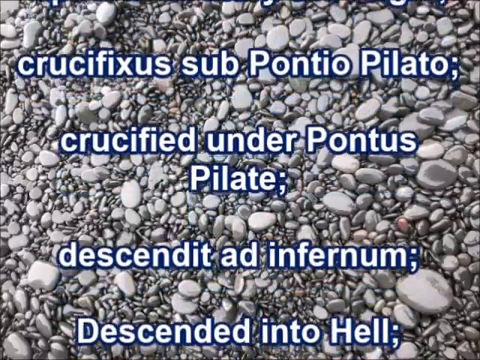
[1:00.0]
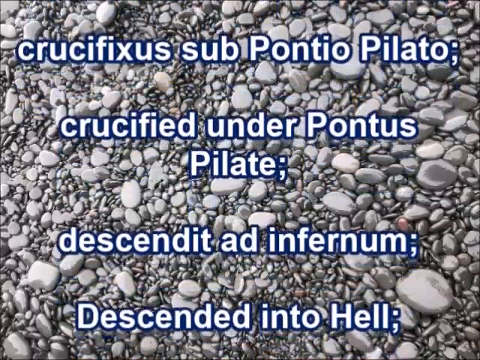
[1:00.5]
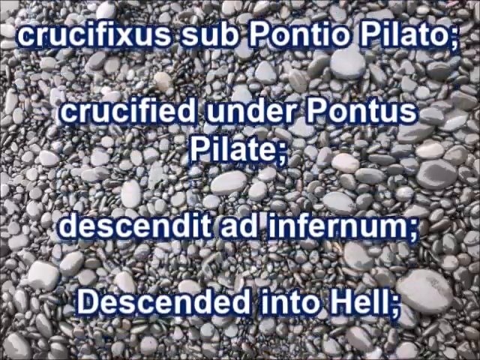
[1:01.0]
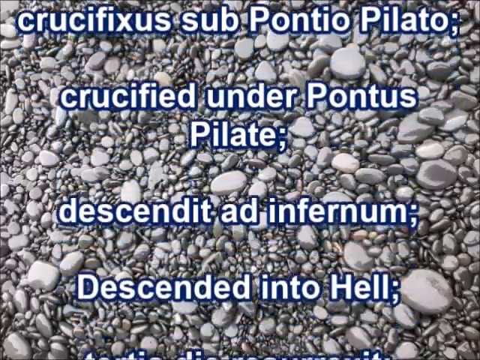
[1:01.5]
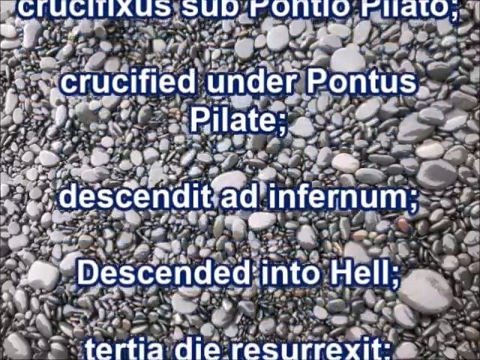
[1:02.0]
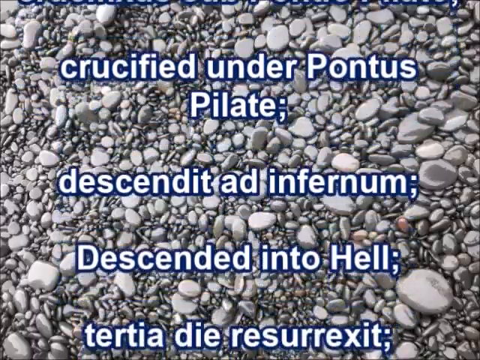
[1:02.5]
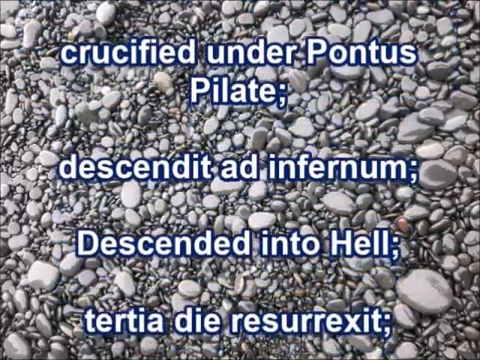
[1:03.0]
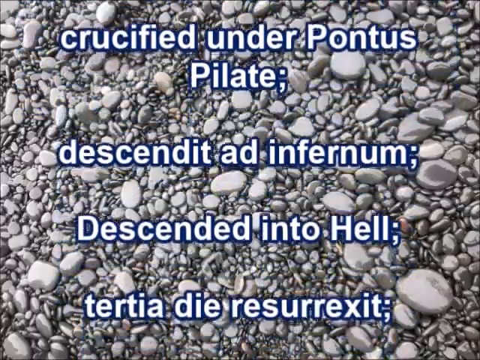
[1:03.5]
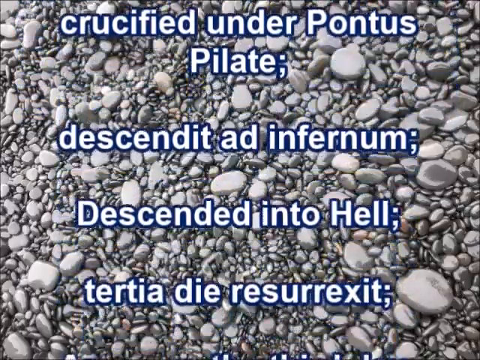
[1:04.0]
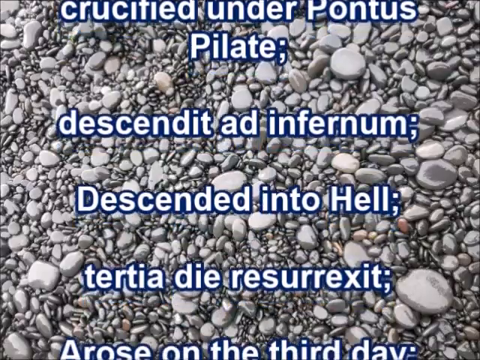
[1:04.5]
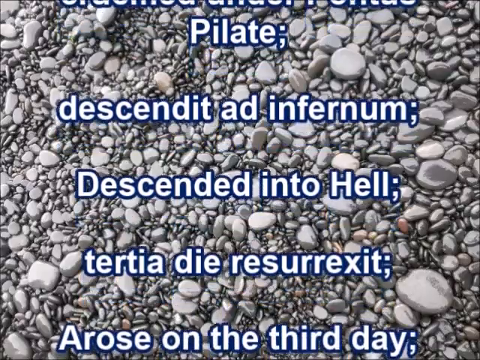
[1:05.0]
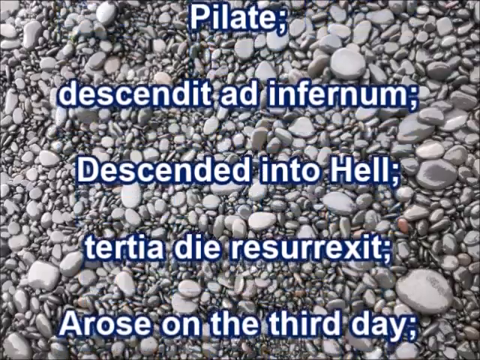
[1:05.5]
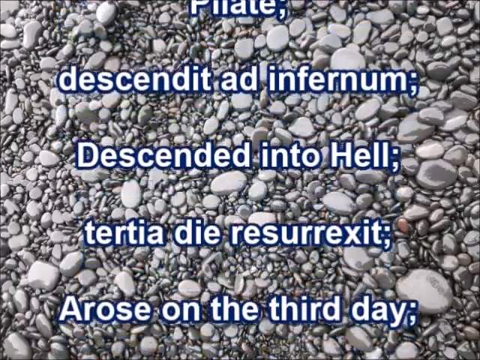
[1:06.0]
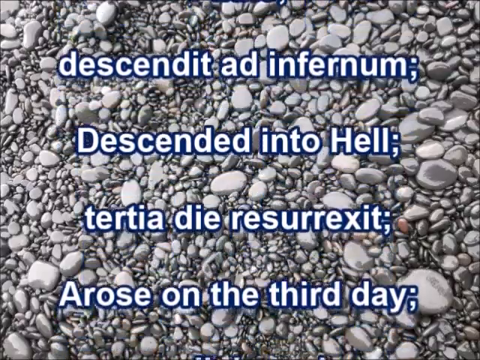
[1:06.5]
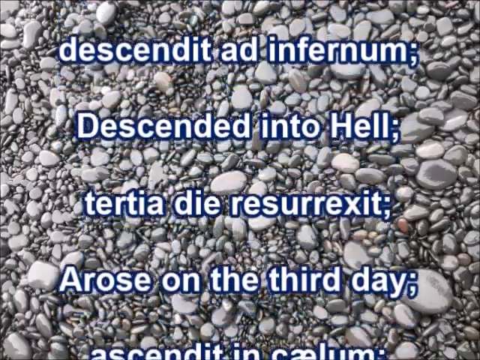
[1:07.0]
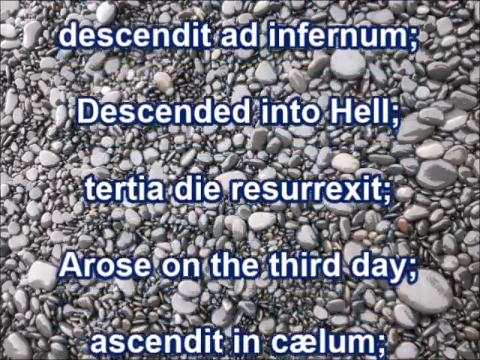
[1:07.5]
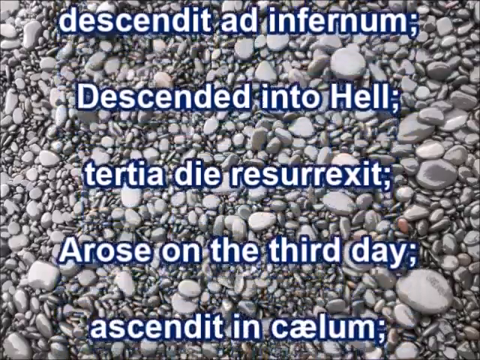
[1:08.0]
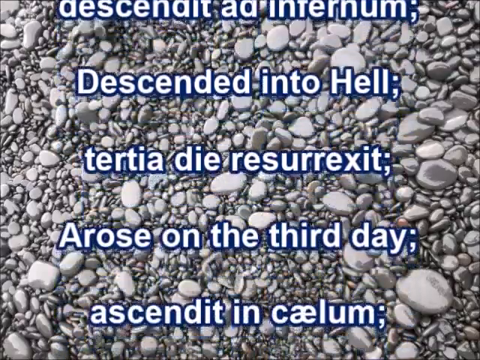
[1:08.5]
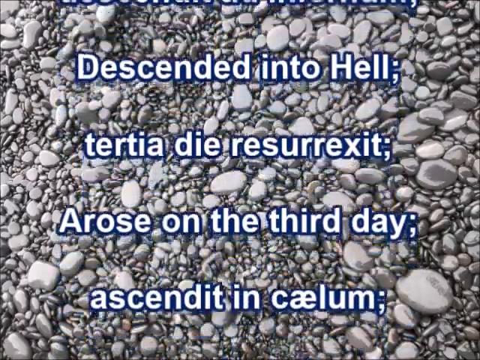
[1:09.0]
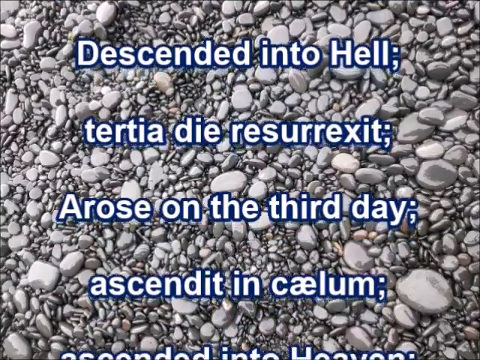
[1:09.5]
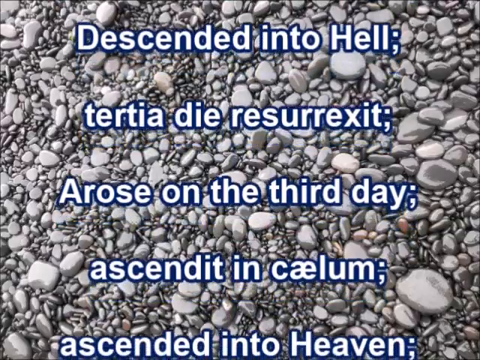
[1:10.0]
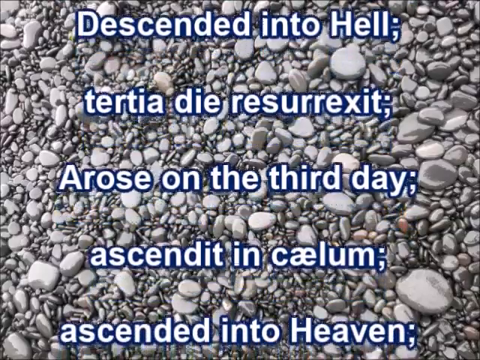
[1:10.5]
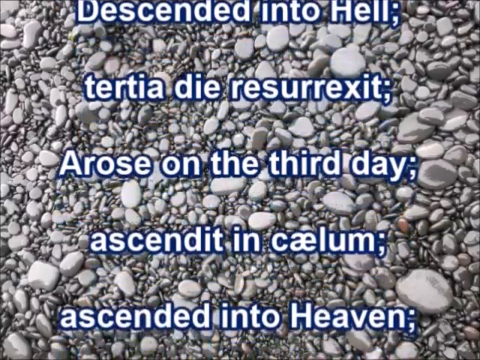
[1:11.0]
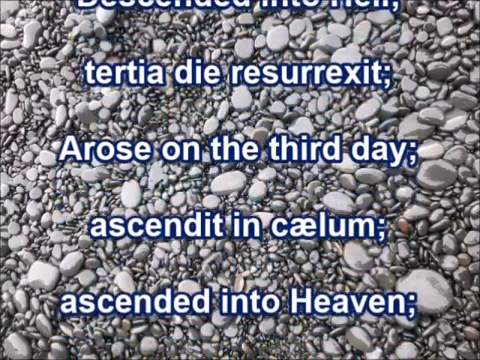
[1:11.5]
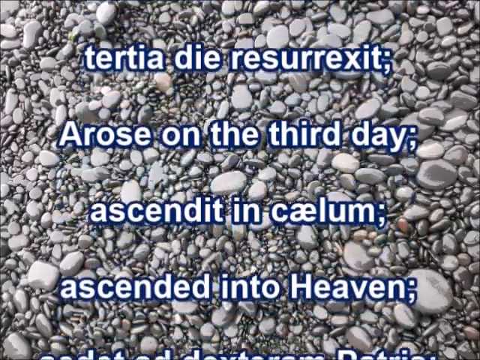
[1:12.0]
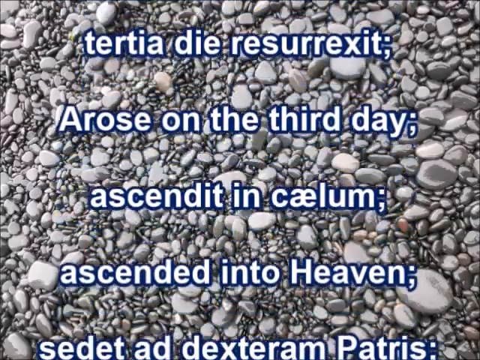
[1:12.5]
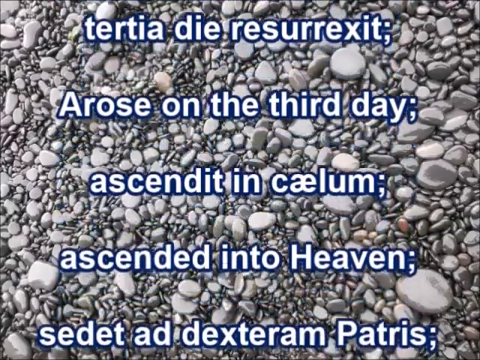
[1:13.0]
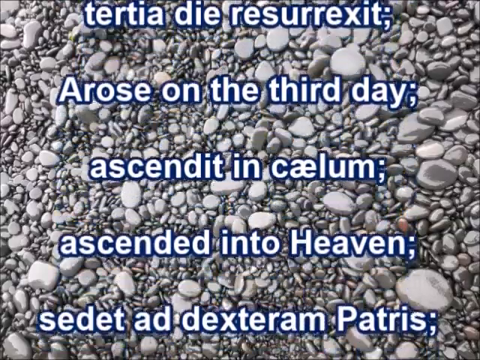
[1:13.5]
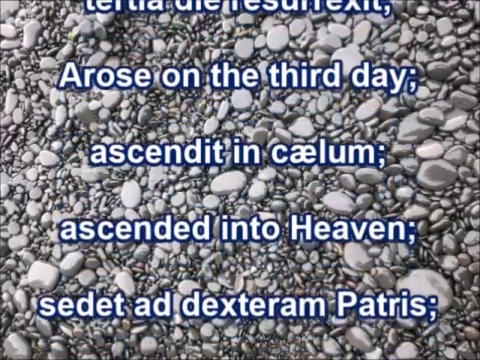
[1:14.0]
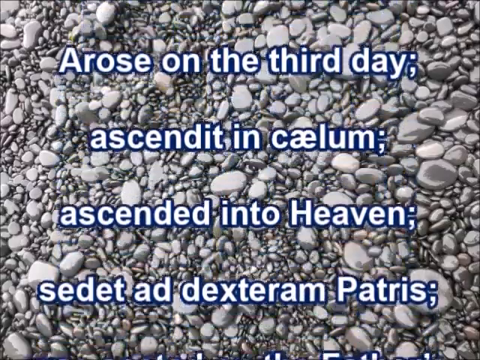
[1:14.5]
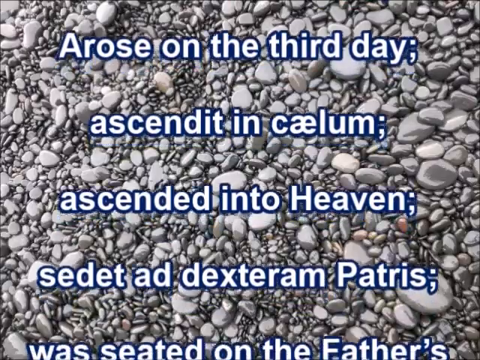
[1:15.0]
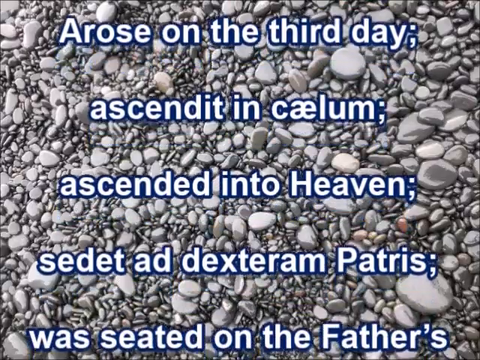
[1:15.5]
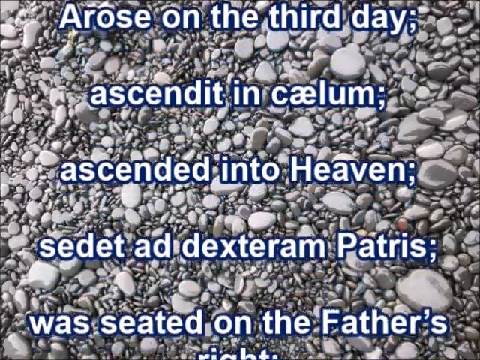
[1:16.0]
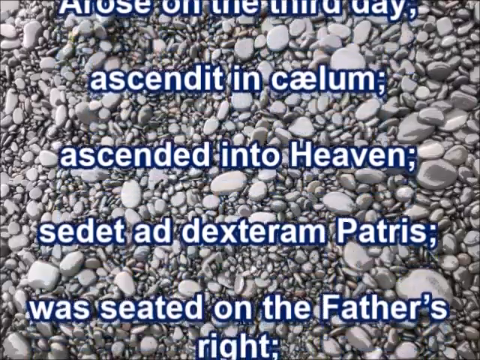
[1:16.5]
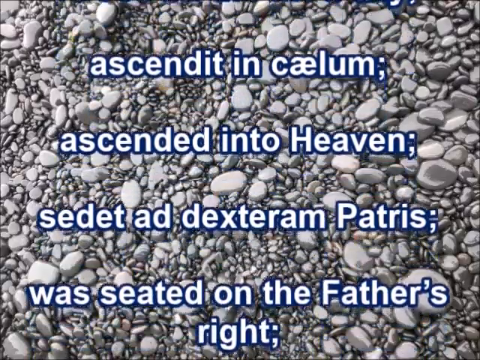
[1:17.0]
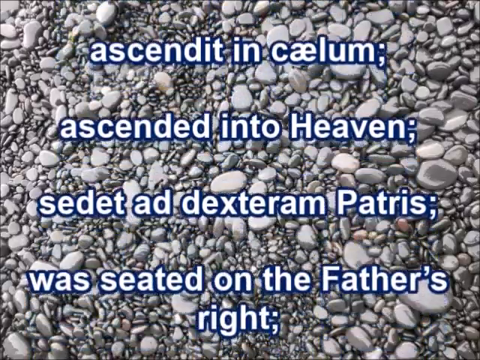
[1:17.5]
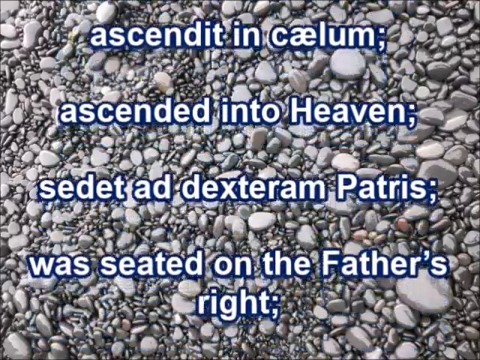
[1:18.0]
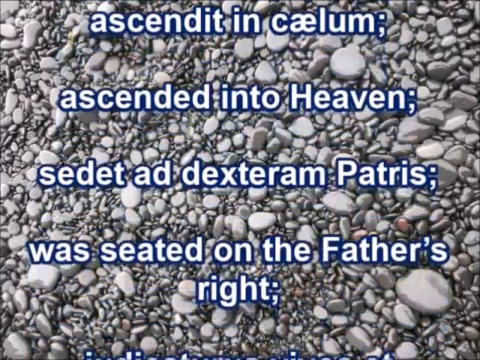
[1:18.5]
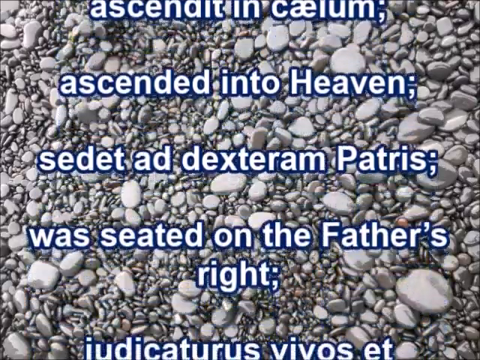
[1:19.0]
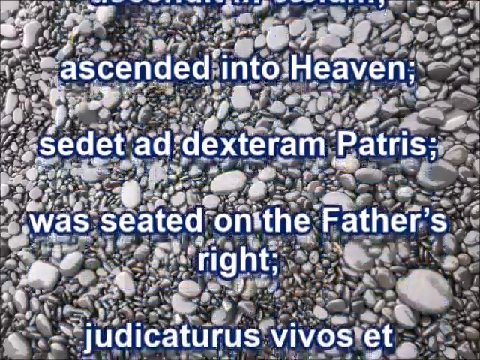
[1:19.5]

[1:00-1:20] More text scrolls by: "rose on the third day," followed by the Italian version; "ascended into heaven," followed by the Italian; "was seated on the father's right," again followed by the Italian; and "descended into hell," followed by the Italian. Nothing else changes, and the background stays the same.